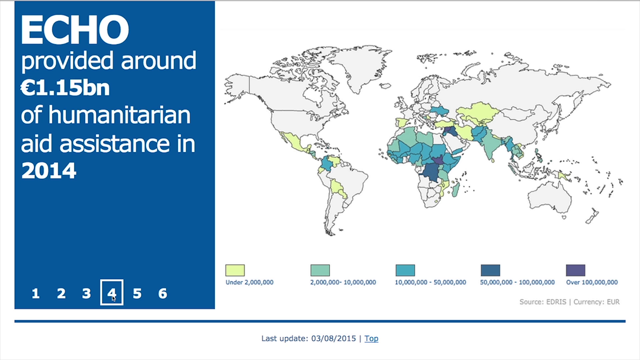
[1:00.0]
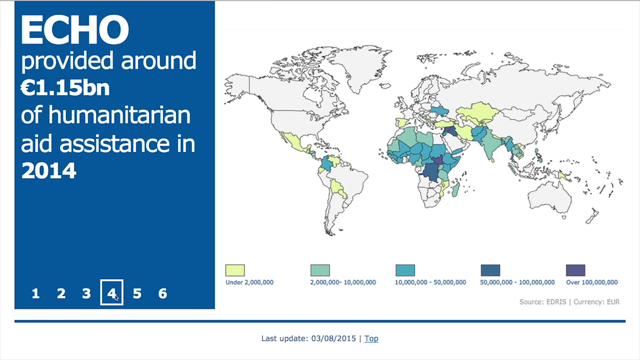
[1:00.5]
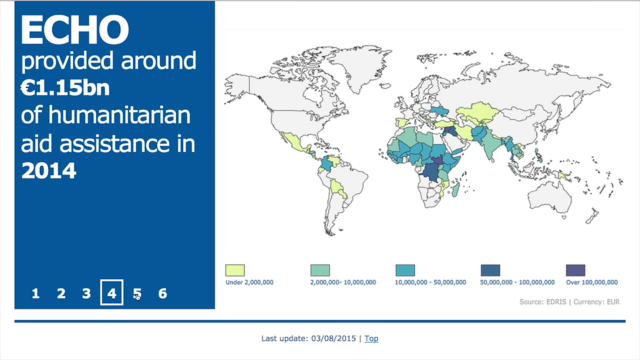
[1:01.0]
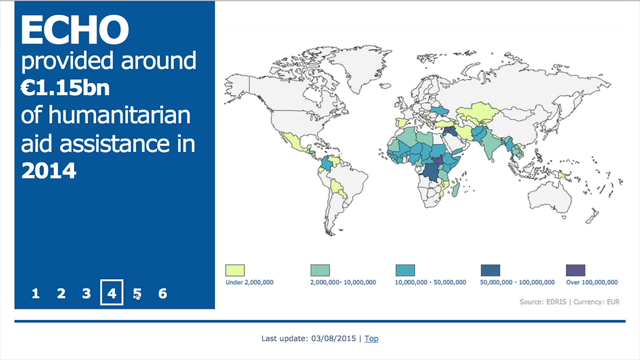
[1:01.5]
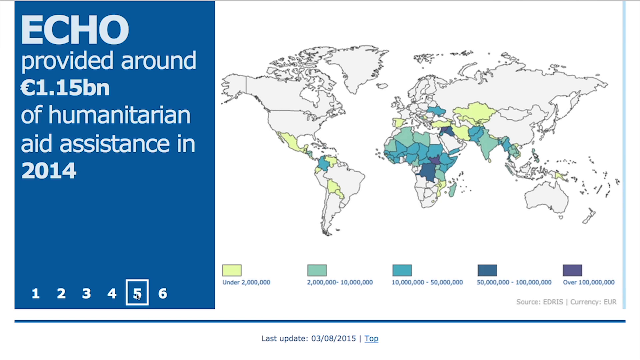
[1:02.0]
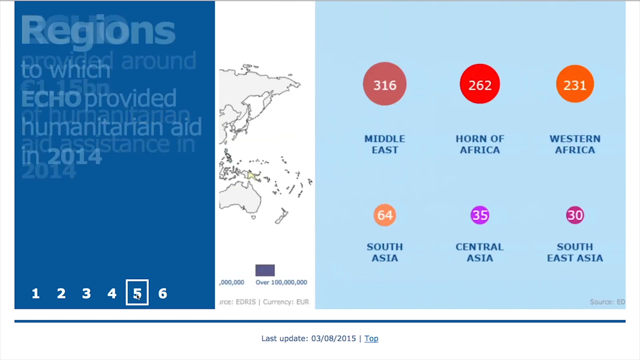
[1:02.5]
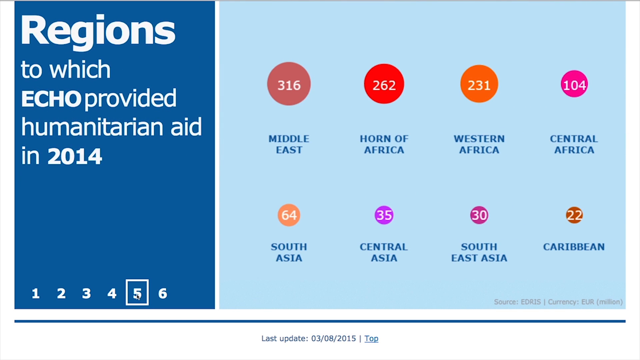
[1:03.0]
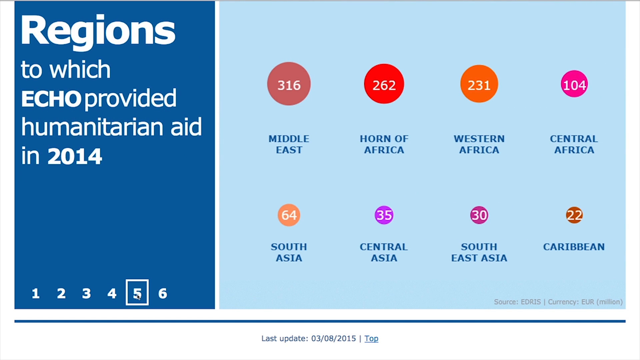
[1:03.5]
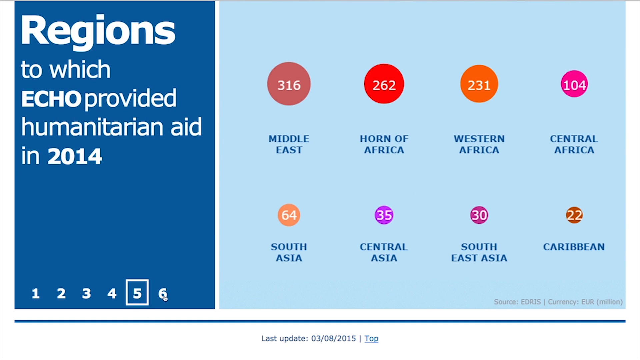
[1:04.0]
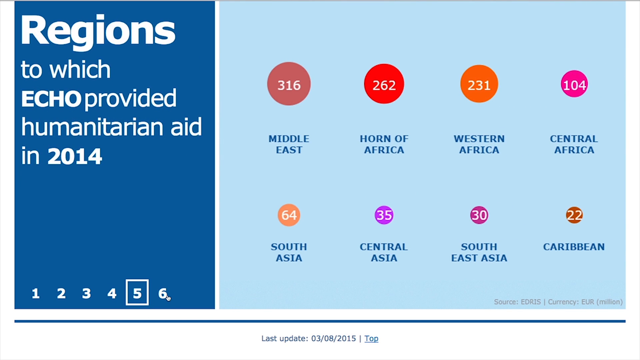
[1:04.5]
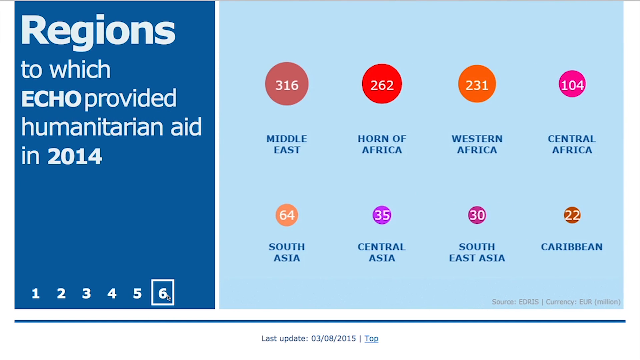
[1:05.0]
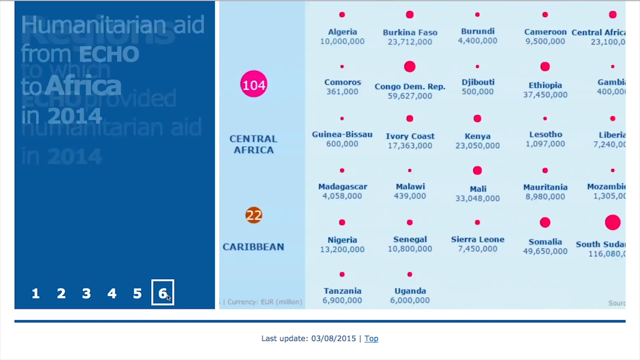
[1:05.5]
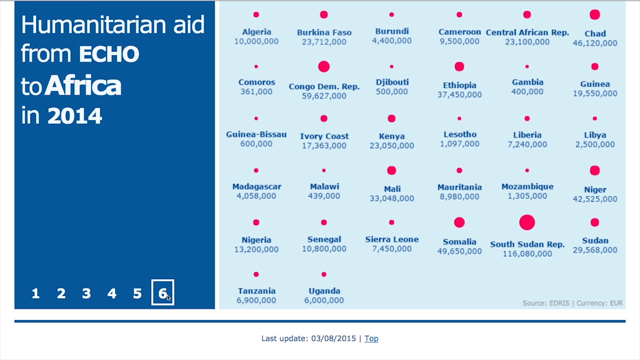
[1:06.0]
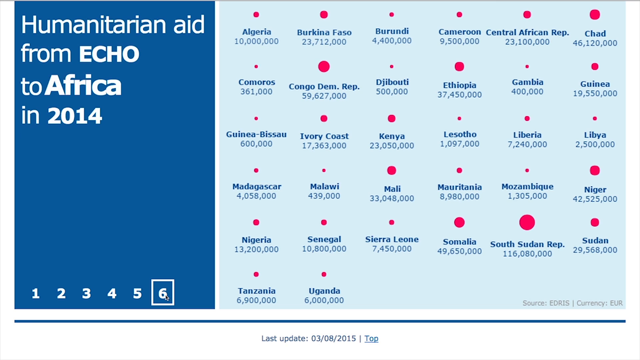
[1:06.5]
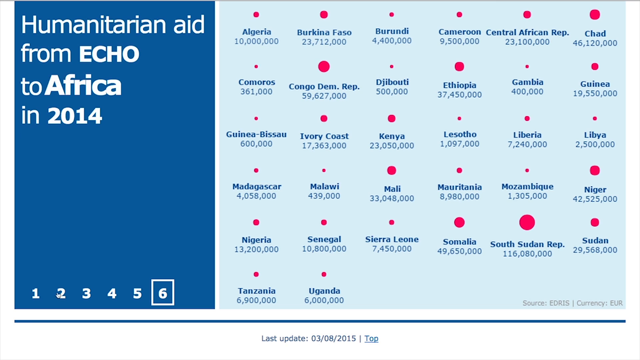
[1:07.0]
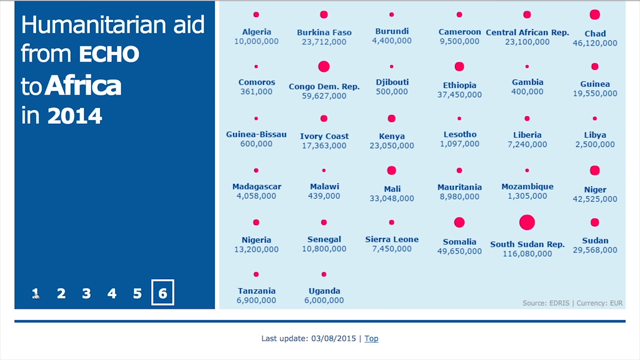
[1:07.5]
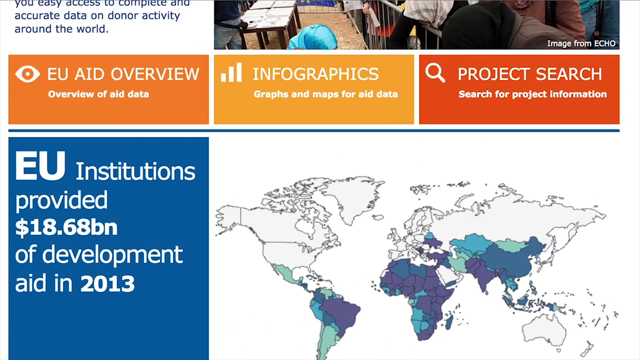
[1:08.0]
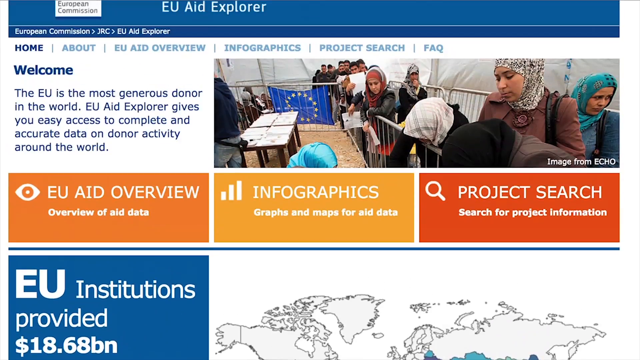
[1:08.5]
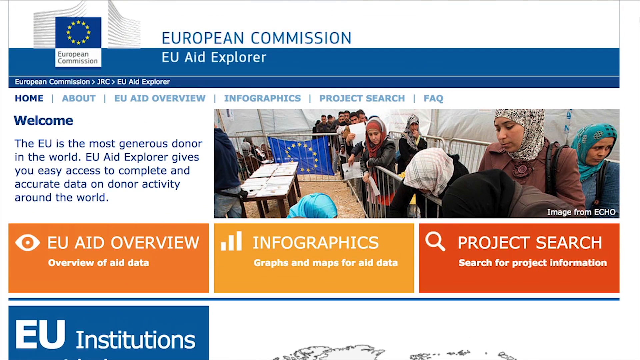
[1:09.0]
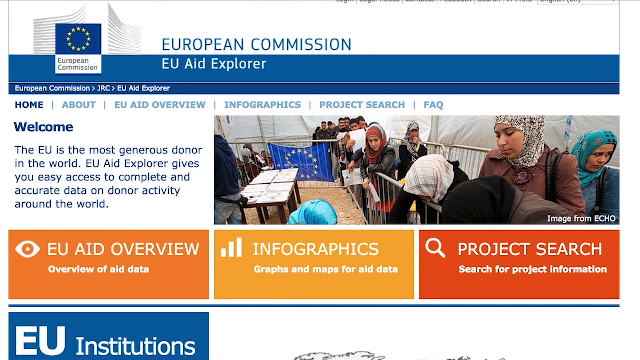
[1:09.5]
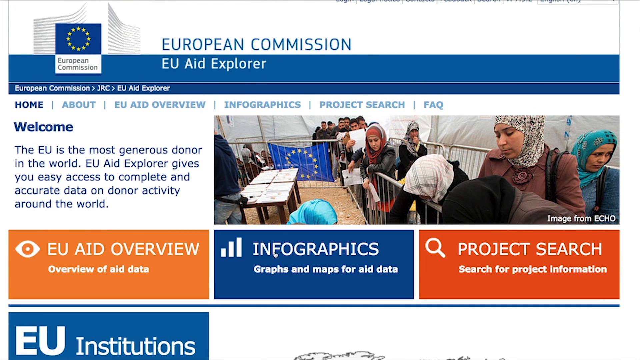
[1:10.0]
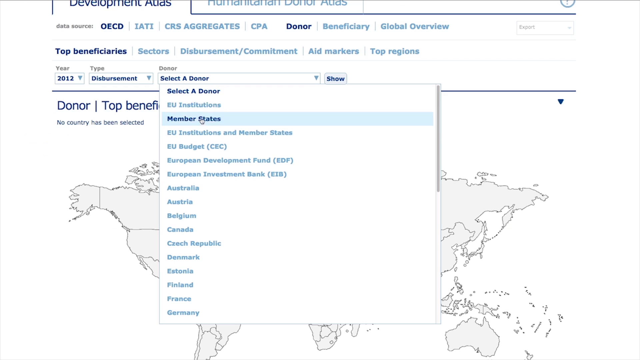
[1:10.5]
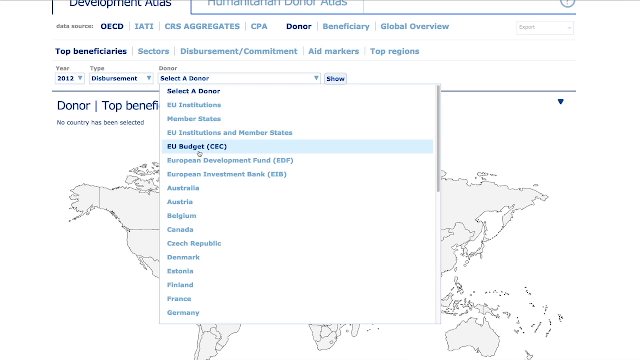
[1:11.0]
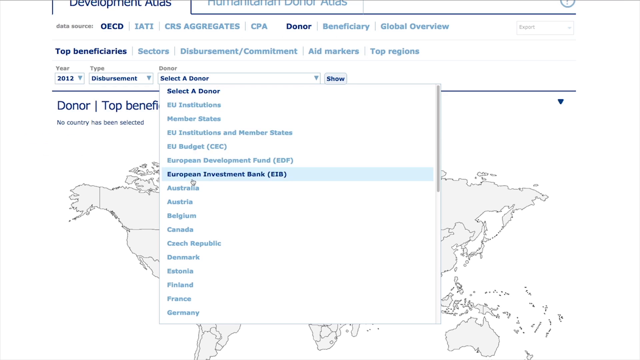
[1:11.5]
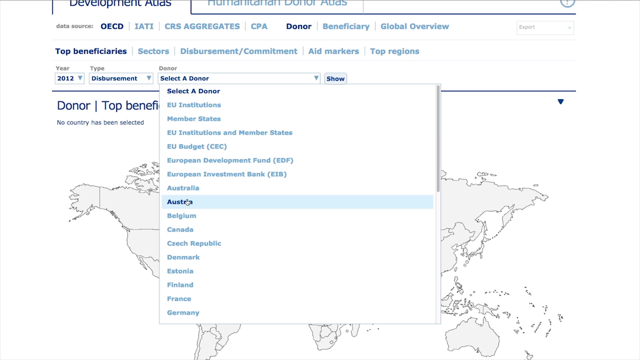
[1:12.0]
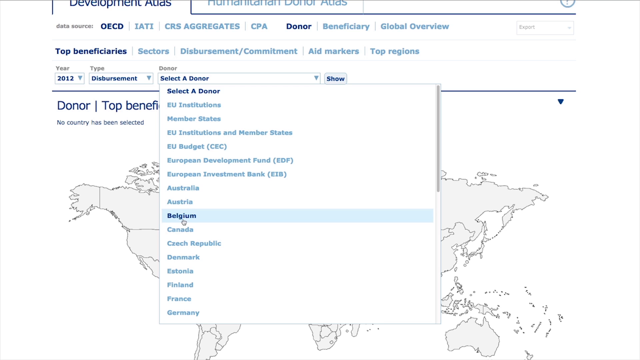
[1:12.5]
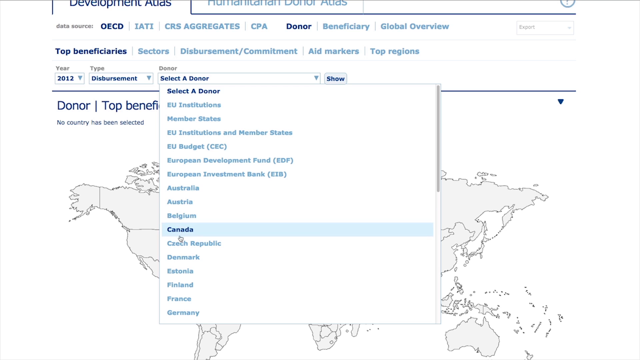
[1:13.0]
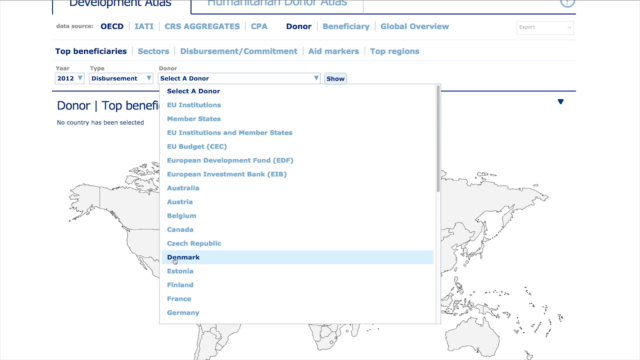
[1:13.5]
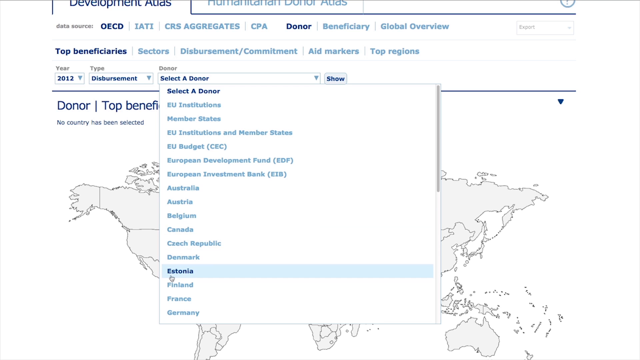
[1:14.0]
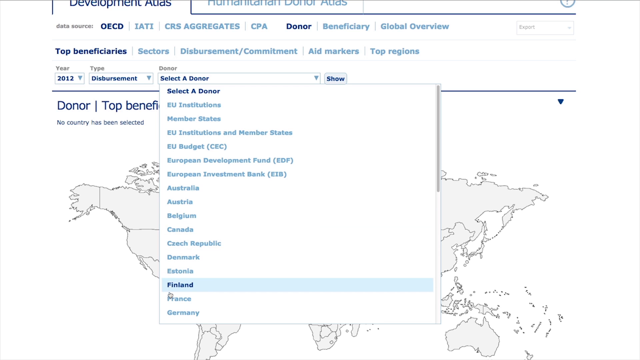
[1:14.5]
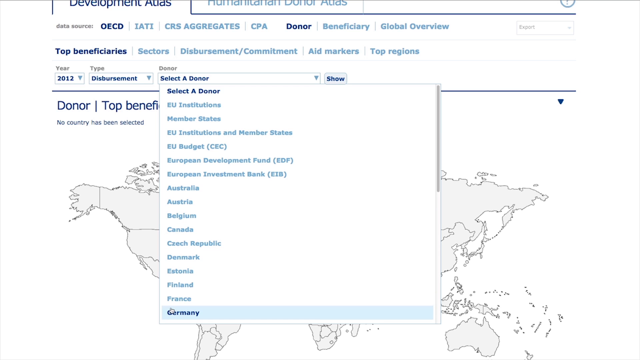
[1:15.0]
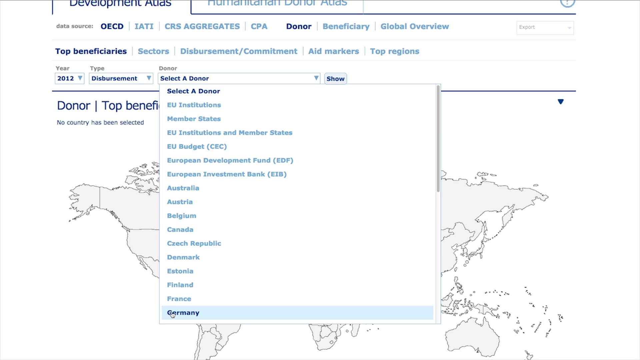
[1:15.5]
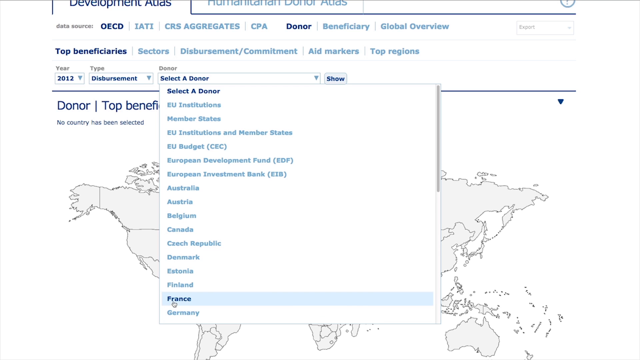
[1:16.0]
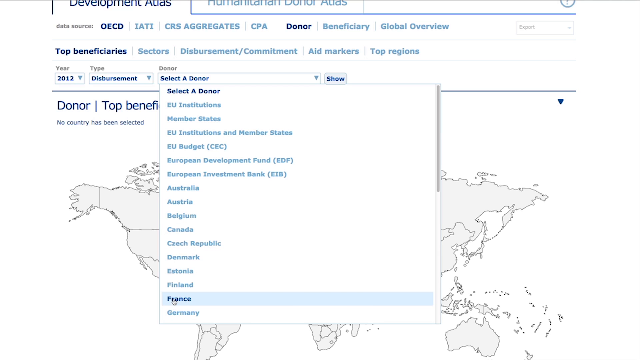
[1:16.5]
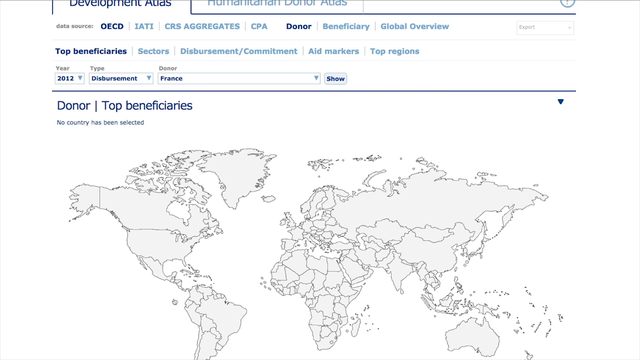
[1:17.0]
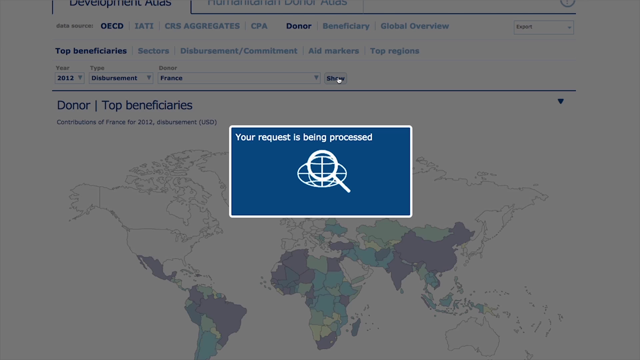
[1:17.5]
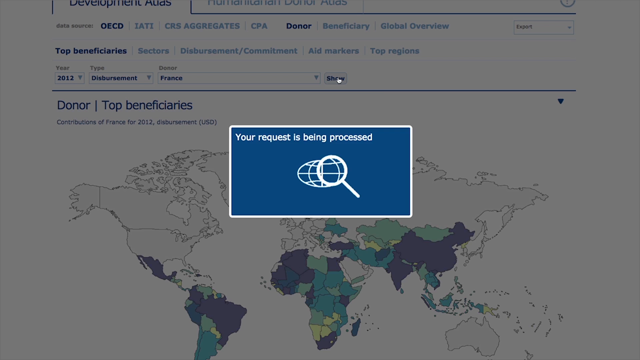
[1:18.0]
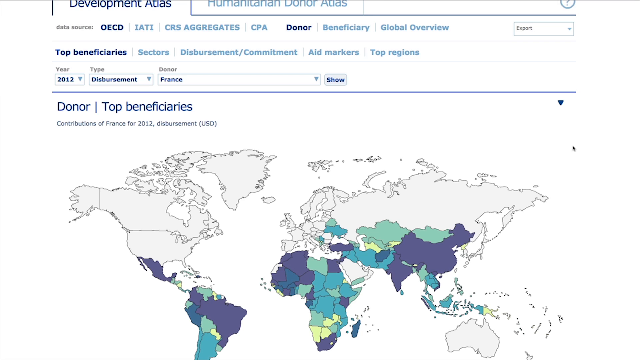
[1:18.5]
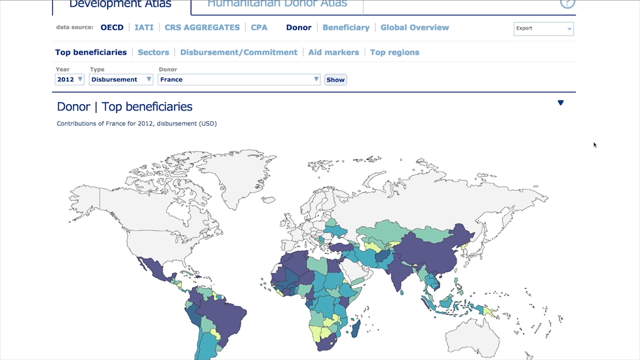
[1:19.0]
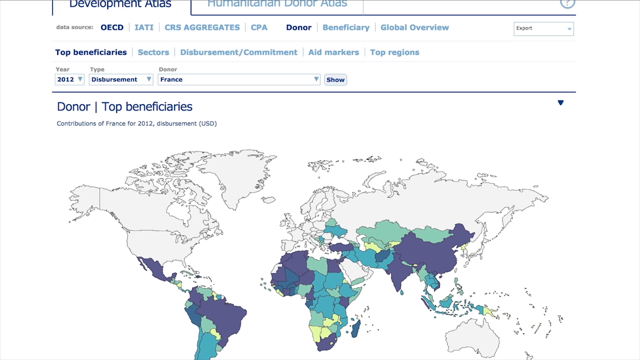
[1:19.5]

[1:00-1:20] The website states that the EU, through a program called ECHO, provided "1.15 billion euro of humanitarian aid assistance in 2014." A map shows which countries got this aid: a few countries in North and South America, including Mexico, Central America, what looks like Colombia, Venezuela, and maybe Ecuador; a bunch of countries in the north and middle of Africa; apparently Spain; and India, Burma, Thailand, Cambodia and a bunch of Middle Eastern countries. Text reads "the regions to which ECHO provided humanitarian aid in 2014": Middle East, Horn of Africa, Western Africa, Central Africa, South Africa, Central Asia, Southeast Asia and Caribbean. These regions have circles above them with numbers, possibly showing how much money went to each place.